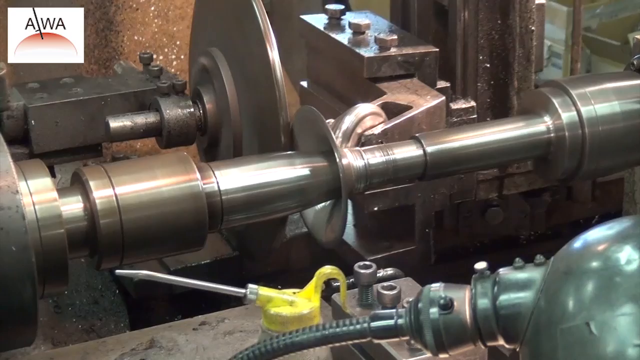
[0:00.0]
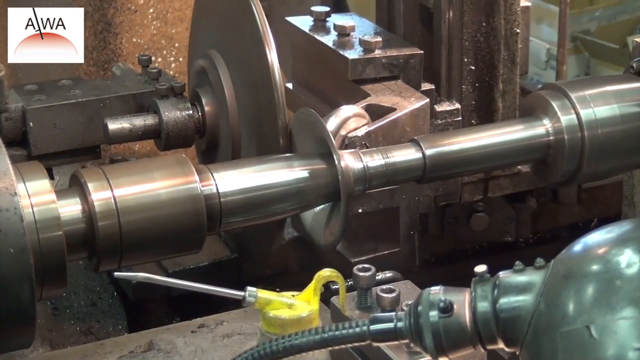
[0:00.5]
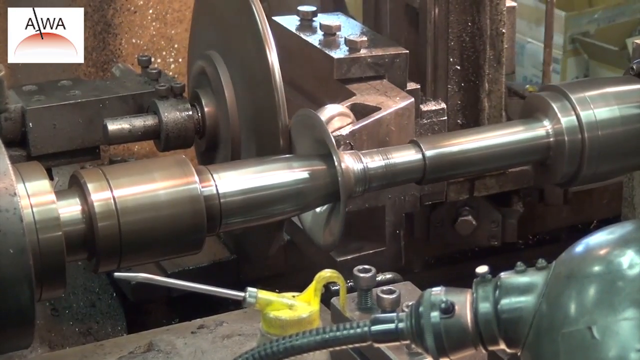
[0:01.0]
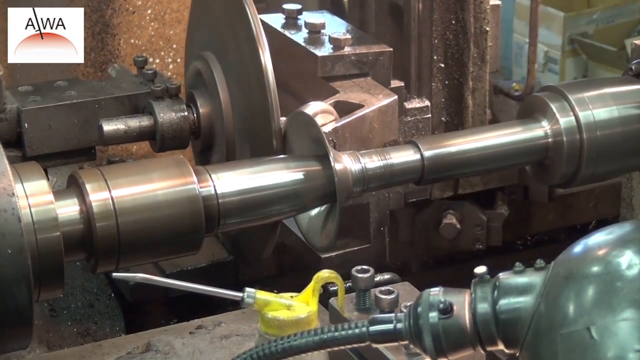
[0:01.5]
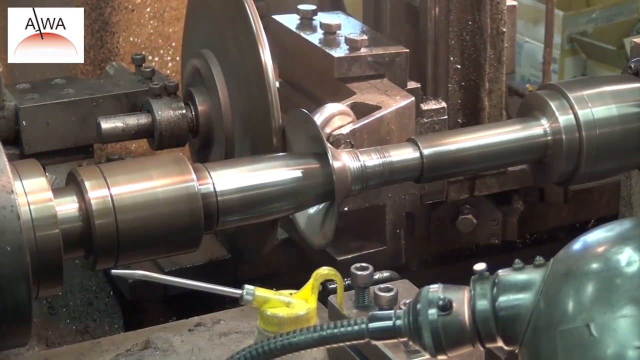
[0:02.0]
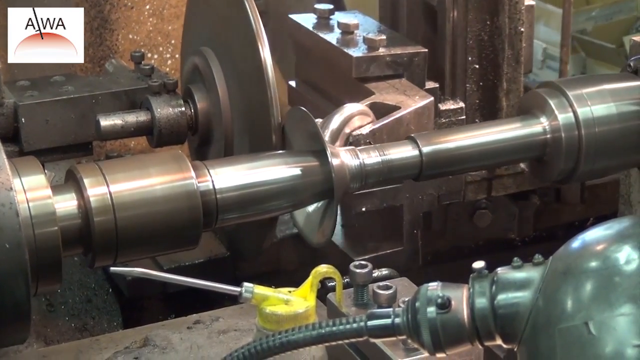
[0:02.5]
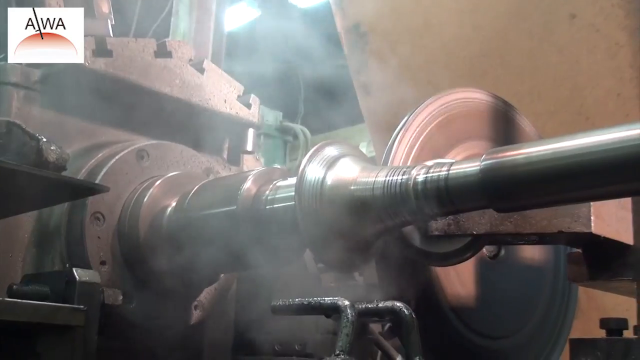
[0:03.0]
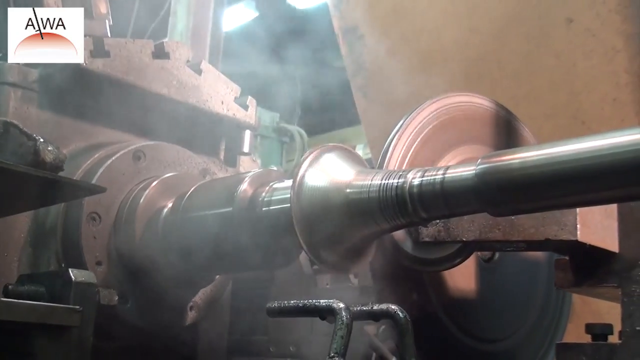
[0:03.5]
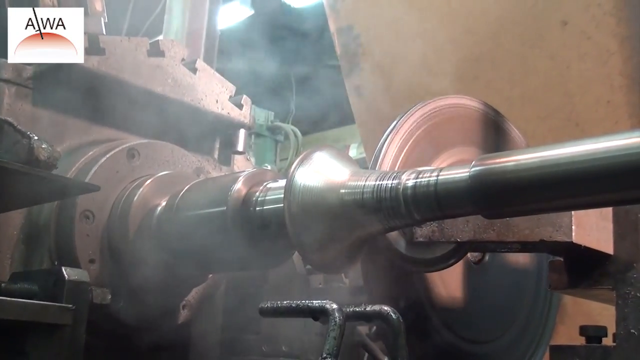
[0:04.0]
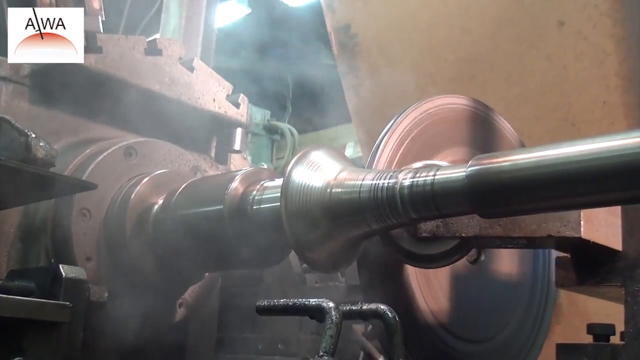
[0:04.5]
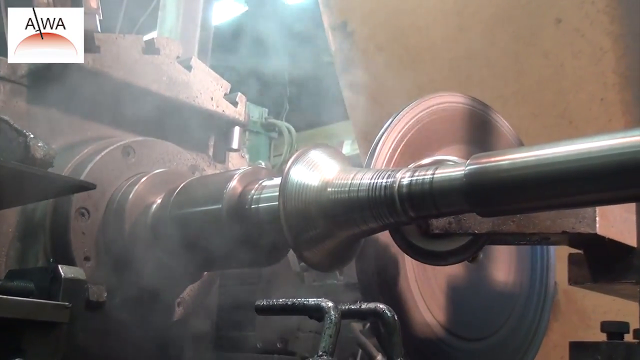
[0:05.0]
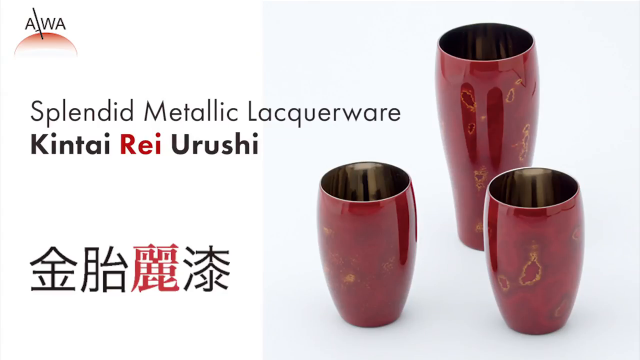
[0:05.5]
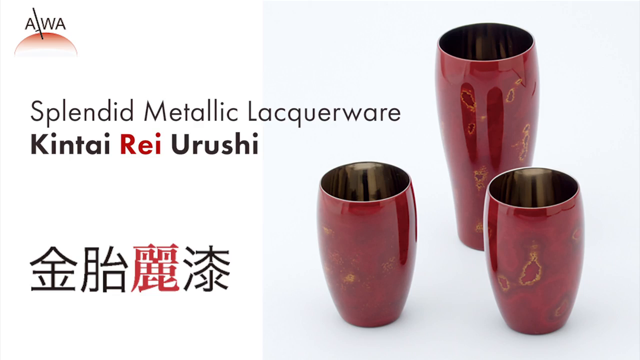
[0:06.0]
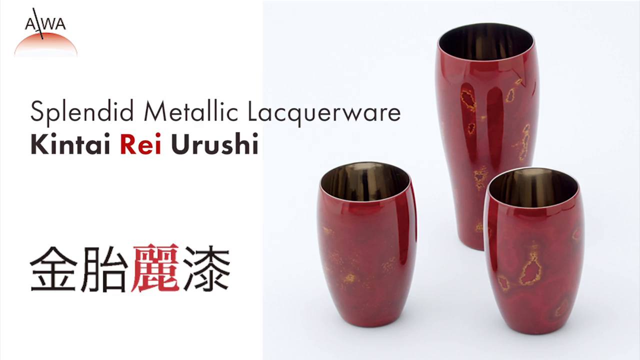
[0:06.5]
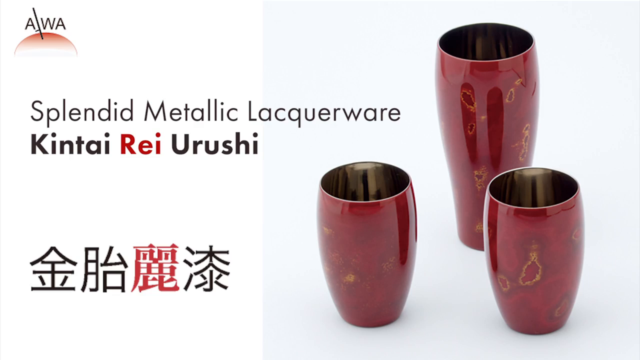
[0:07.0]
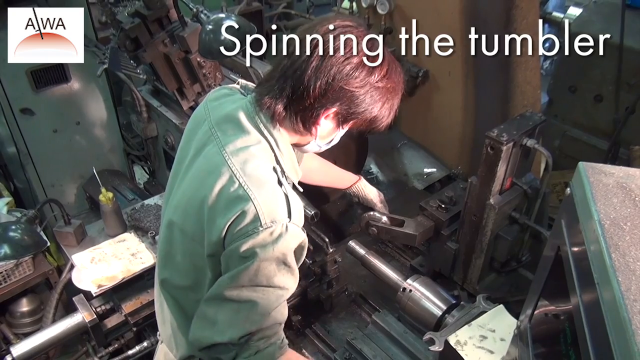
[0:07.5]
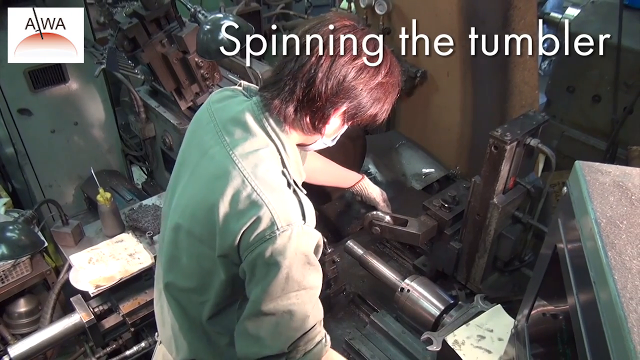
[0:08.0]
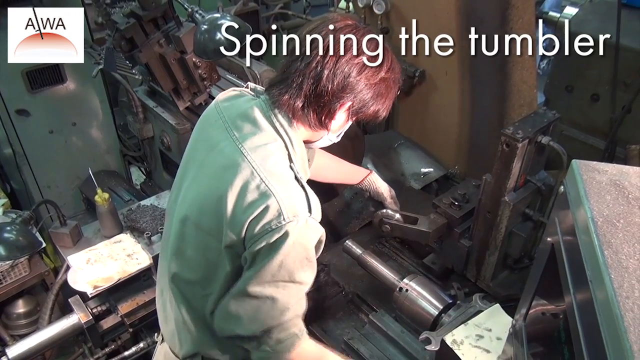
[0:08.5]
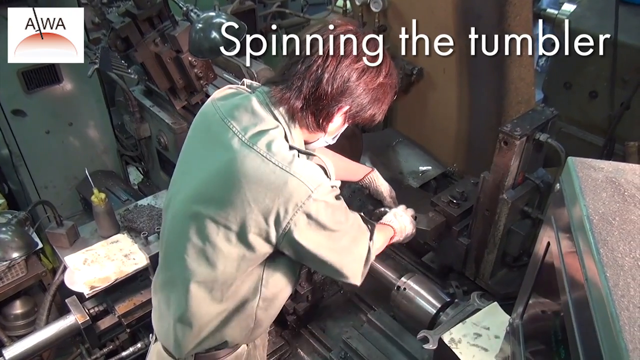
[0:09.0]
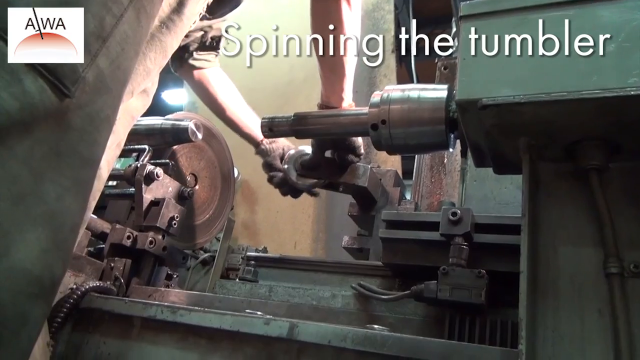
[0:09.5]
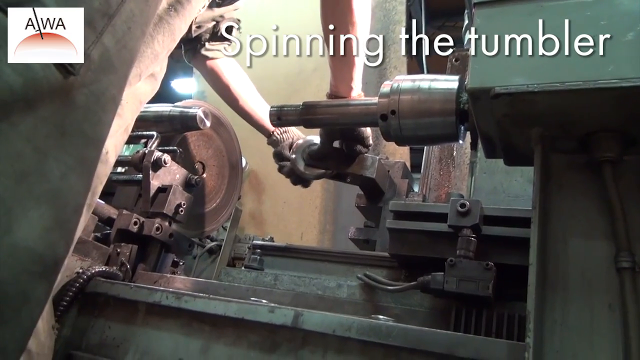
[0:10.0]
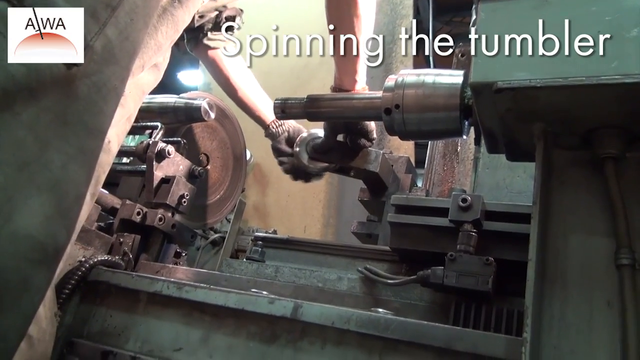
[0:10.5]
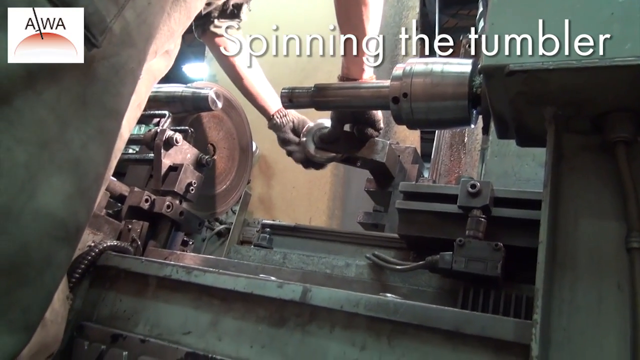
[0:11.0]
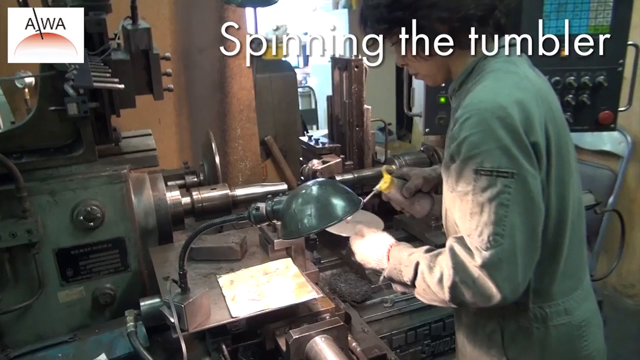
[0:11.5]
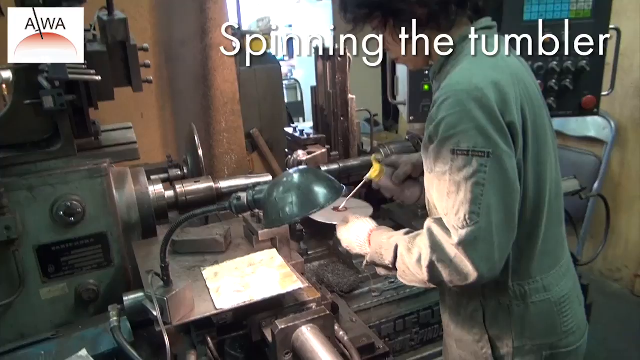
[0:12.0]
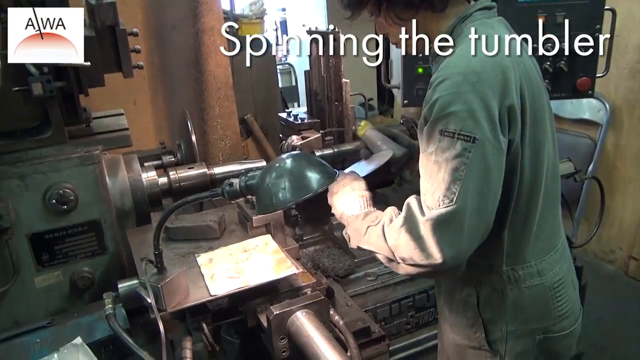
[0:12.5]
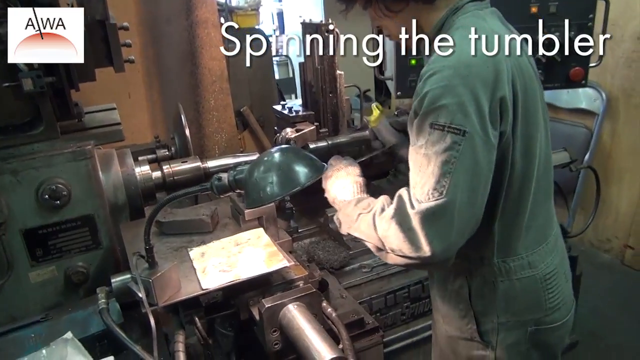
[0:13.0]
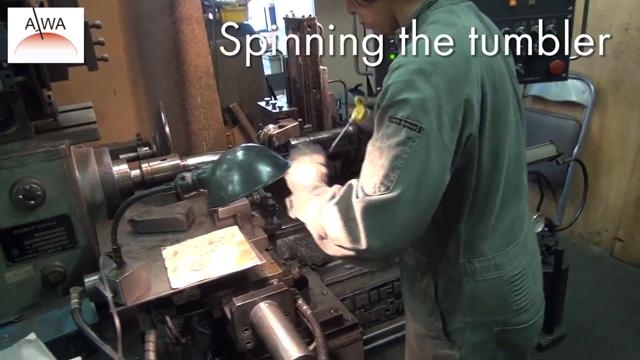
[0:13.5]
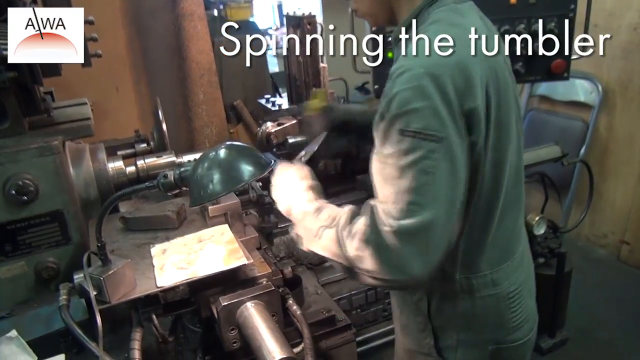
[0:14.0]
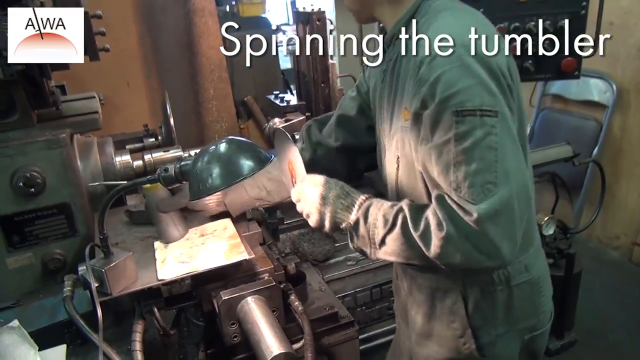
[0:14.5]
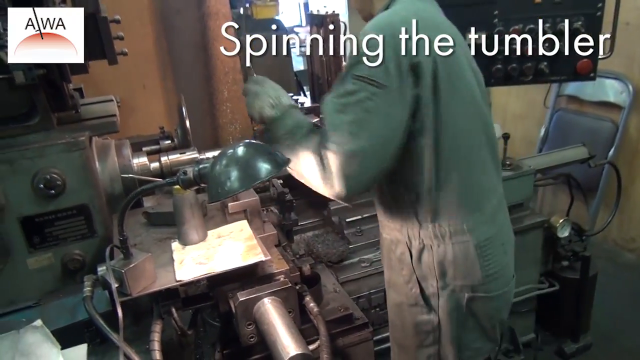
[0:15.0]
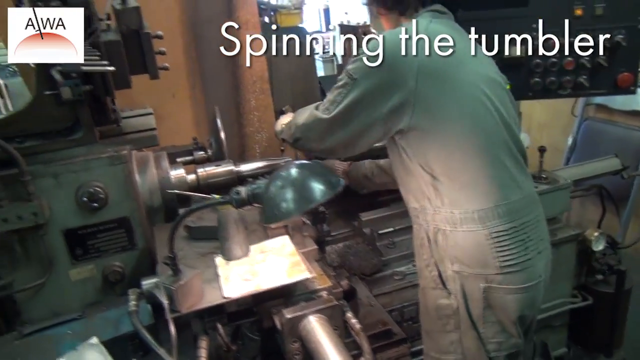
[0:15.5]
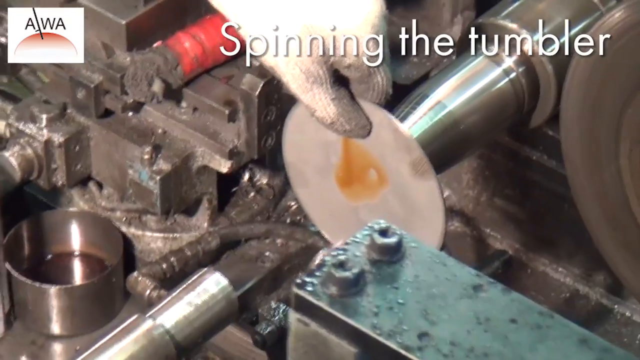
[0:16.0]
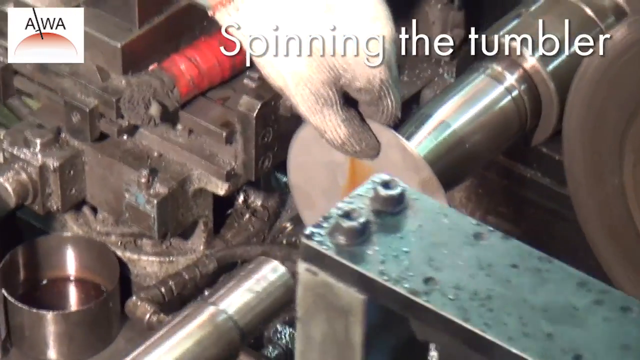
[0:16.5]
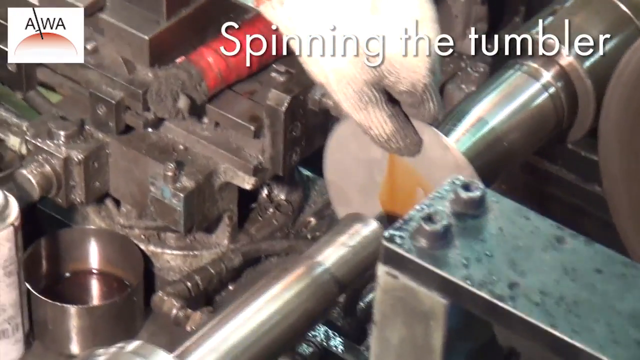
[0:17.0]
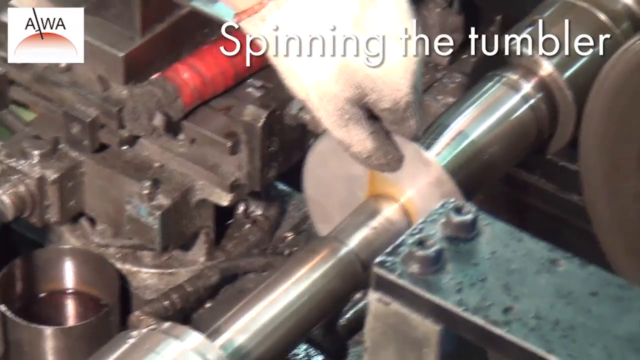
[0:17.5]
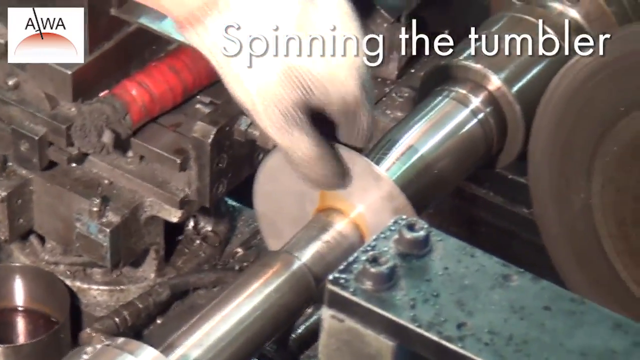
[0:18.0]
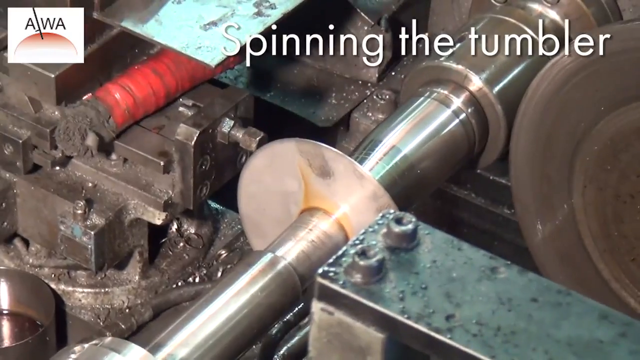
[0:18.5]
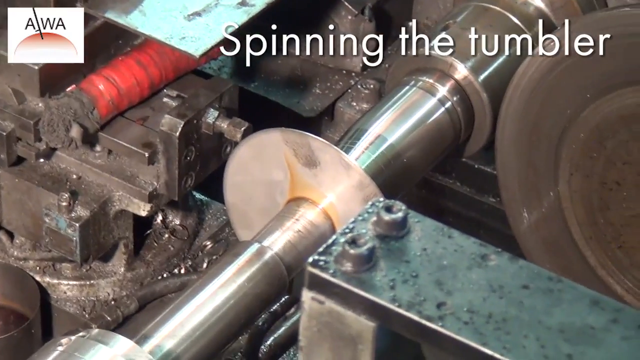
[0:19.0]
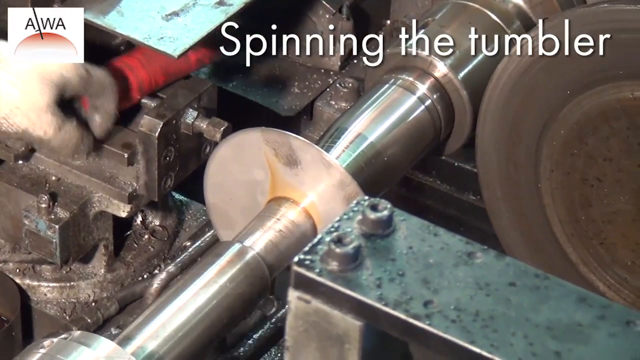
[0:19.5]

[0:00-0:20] Parts move in a factory. Close-ups show what looks like metal grinding machinery making some kind of small structure. A product page on a website follows, apparently showing some kind of small object, maybe a red vase, with text that seems to read "Yorushi". Next, a person uses the machinery while the on-screen text reads "spinning the tumbler" in white. The person, who might be Asian and might be a man, has short dark brown hair and wears gloves. He picks up a small brown disc and puts it in the machinery, uses a nozzle to spread something on the disc, then puts it between the machinery, and the machinery starts to move before the shot cuts. The factory equipment is shiny, very silvery metal; some areas look fairly clean, others look dirty and grimy, and some look a little rusty. A round, domed blue lamp in front of the man casts light on his workspace.